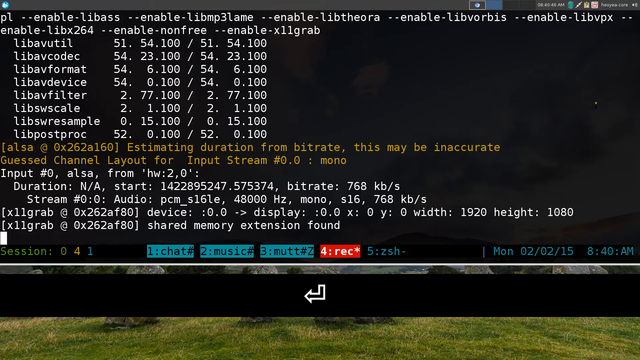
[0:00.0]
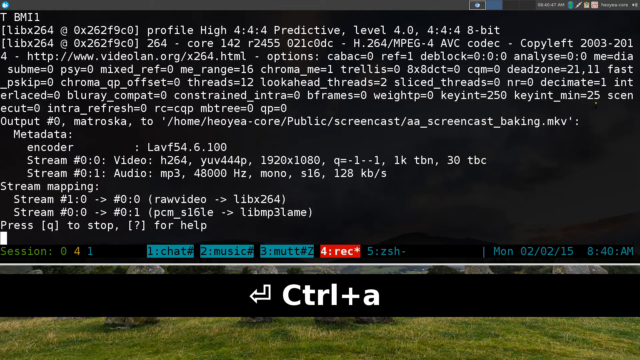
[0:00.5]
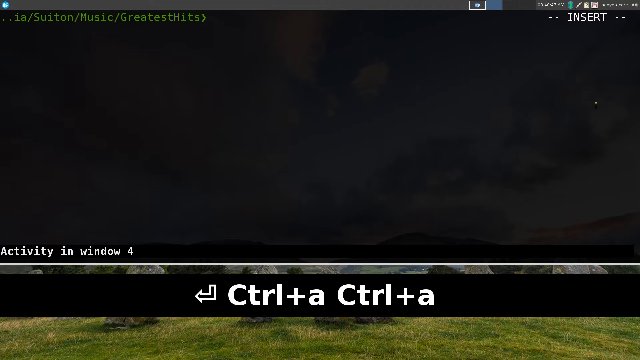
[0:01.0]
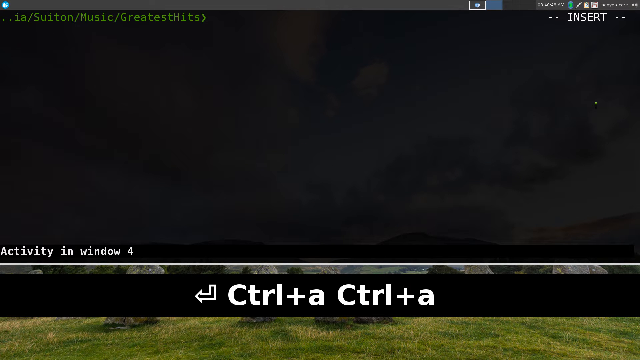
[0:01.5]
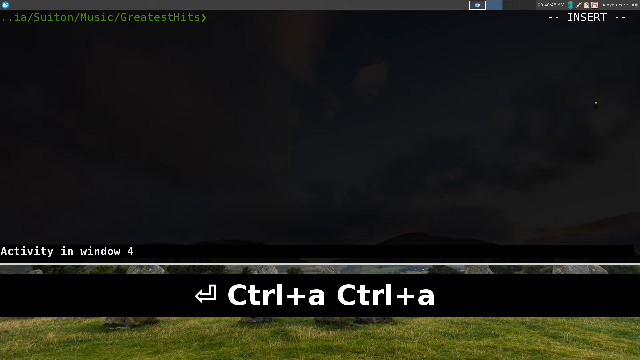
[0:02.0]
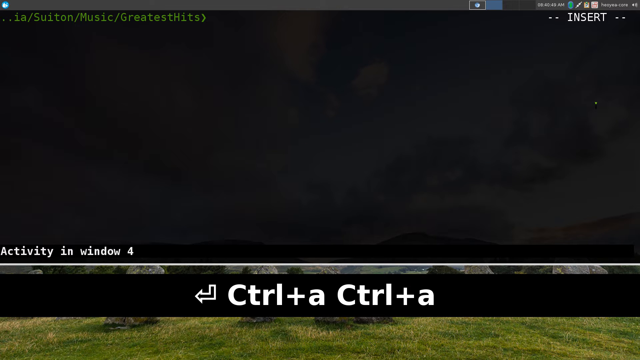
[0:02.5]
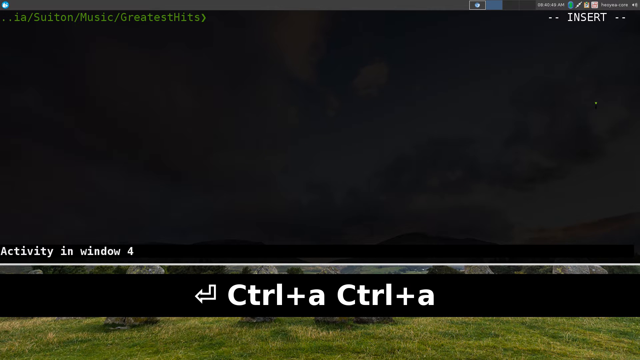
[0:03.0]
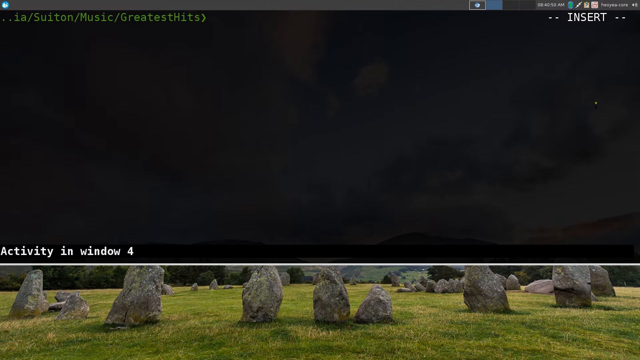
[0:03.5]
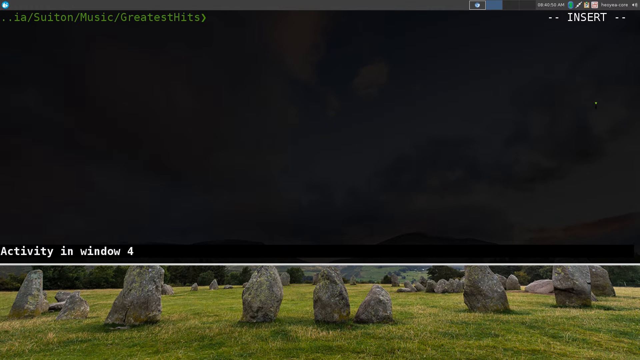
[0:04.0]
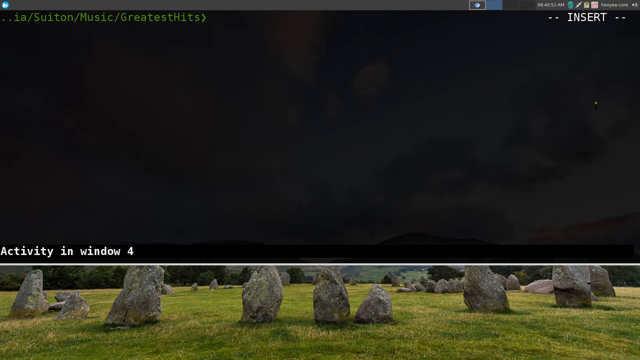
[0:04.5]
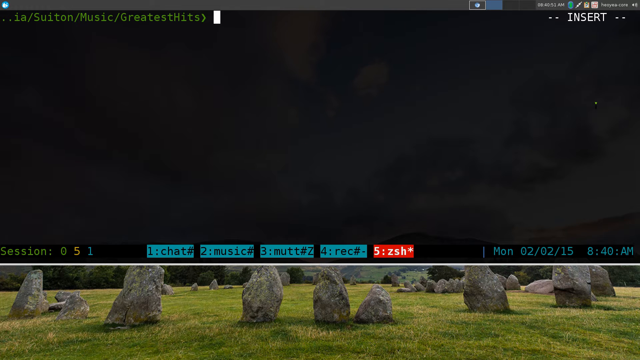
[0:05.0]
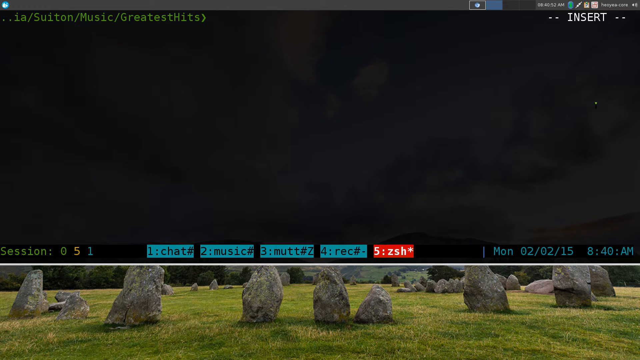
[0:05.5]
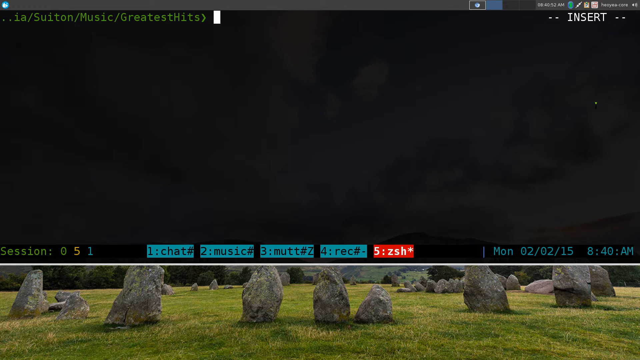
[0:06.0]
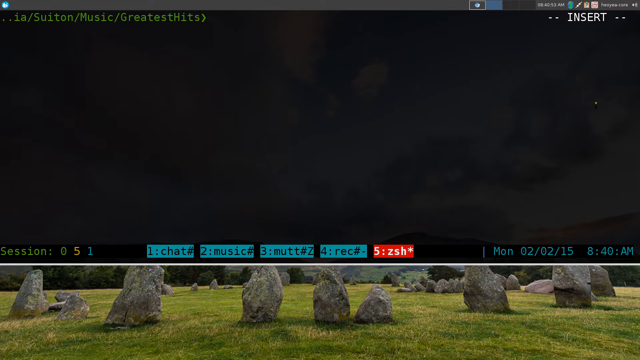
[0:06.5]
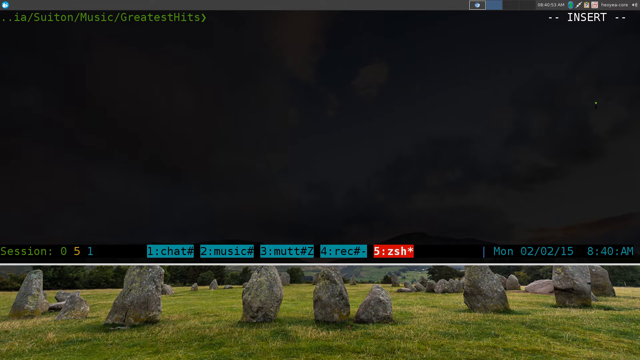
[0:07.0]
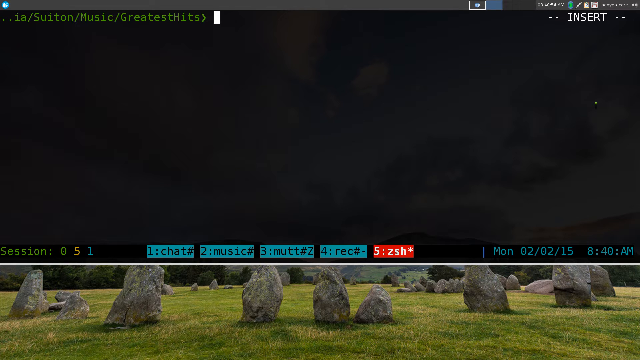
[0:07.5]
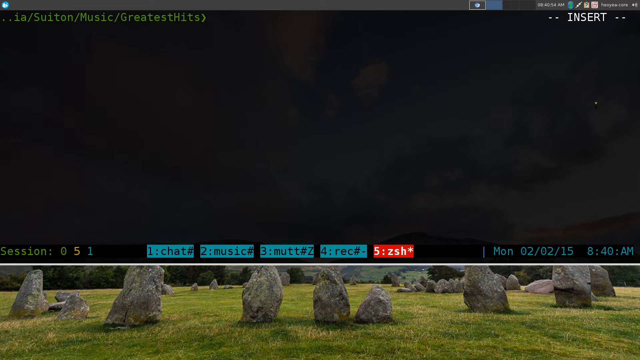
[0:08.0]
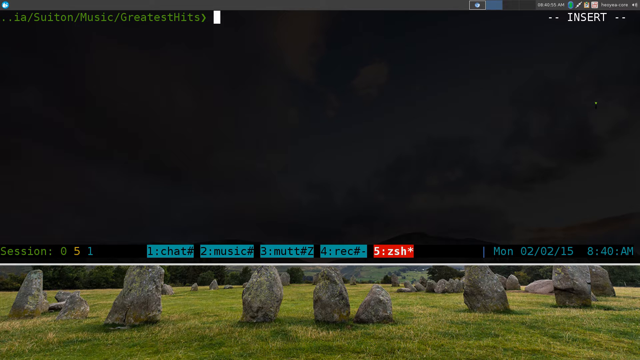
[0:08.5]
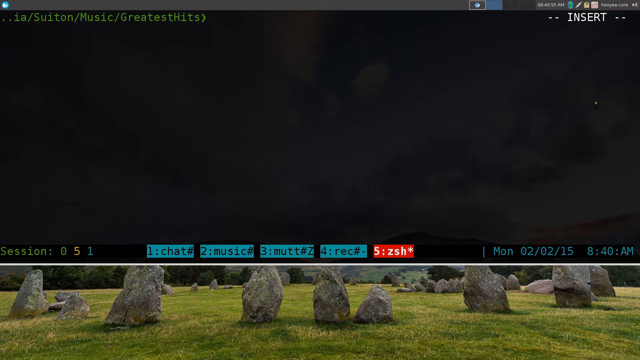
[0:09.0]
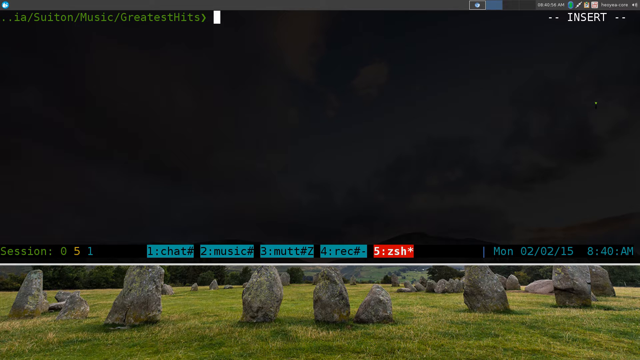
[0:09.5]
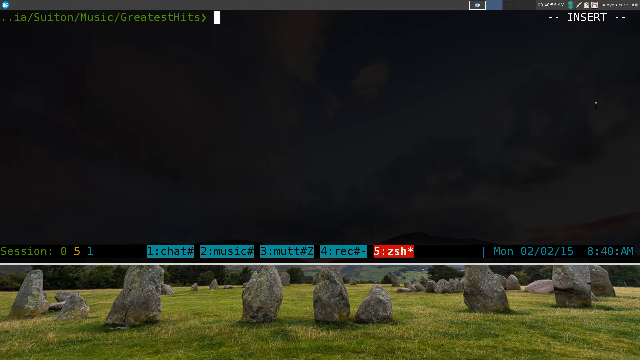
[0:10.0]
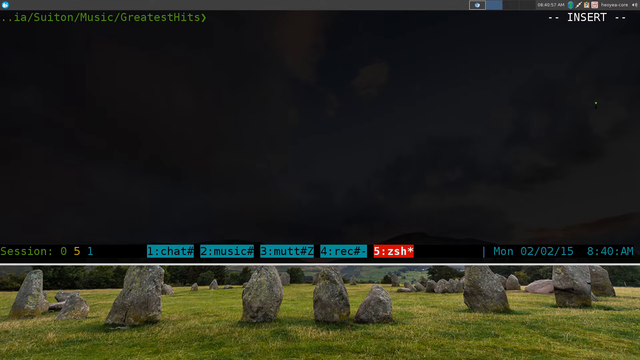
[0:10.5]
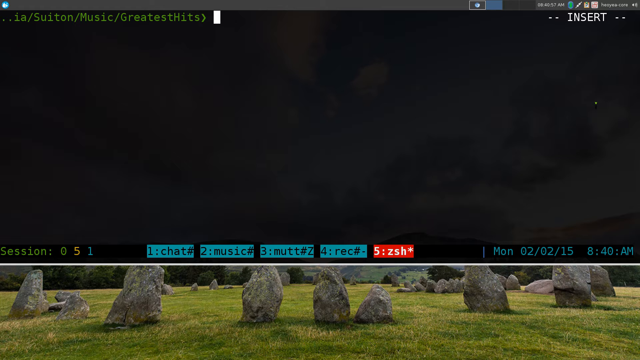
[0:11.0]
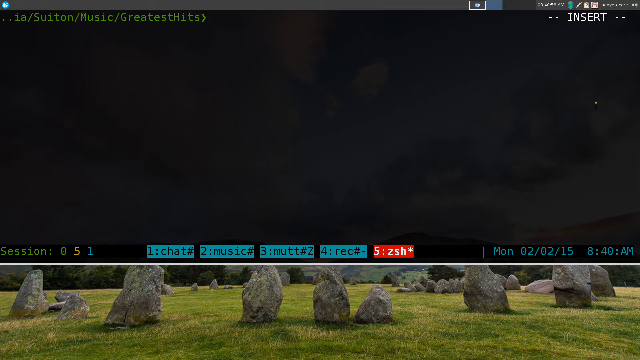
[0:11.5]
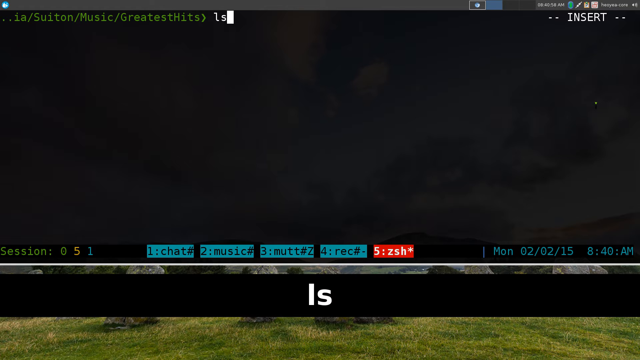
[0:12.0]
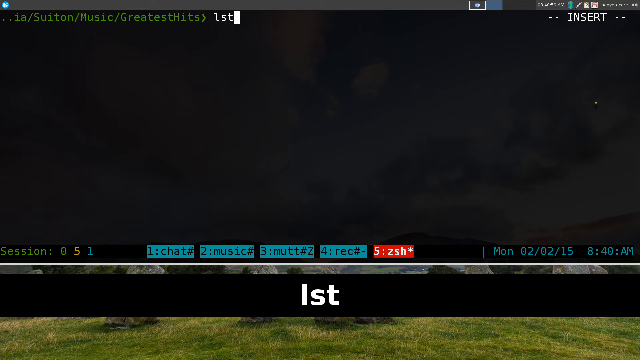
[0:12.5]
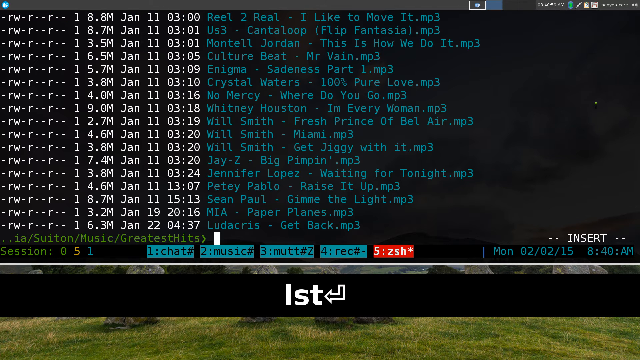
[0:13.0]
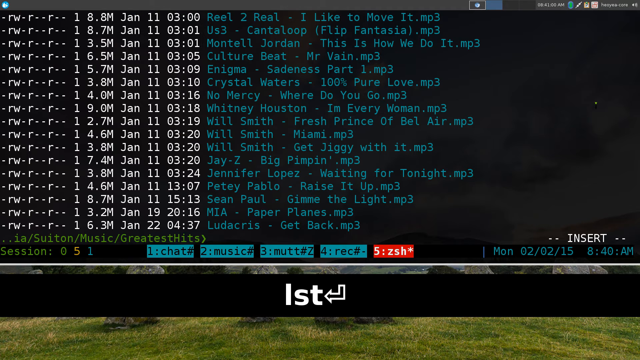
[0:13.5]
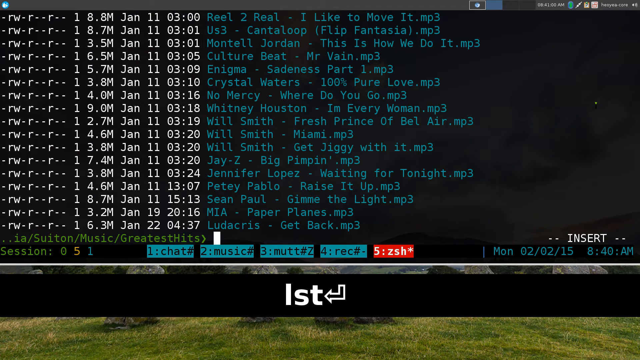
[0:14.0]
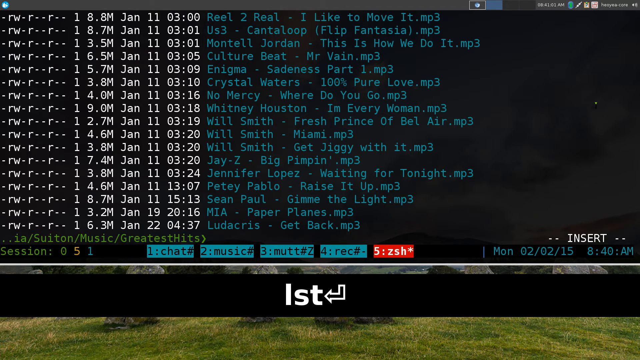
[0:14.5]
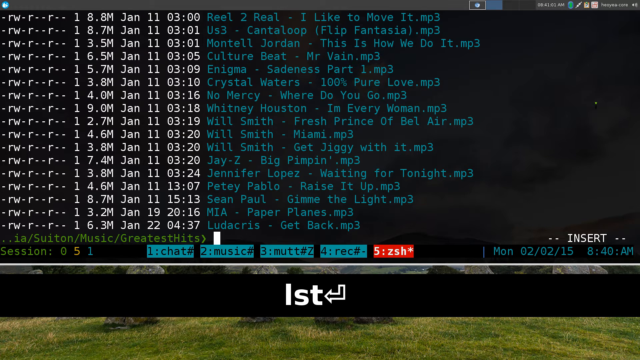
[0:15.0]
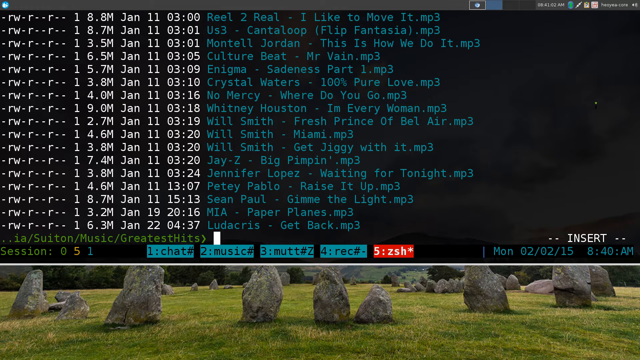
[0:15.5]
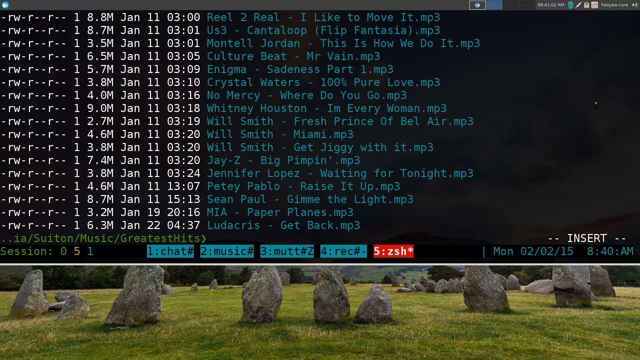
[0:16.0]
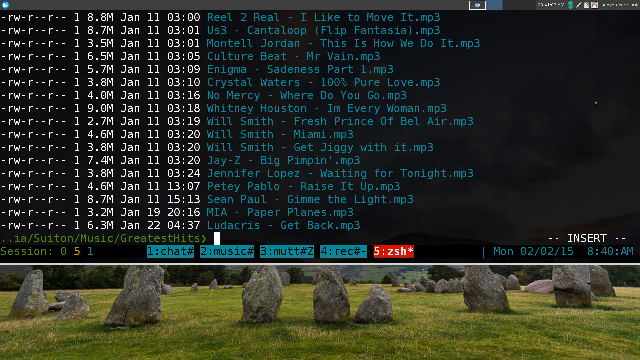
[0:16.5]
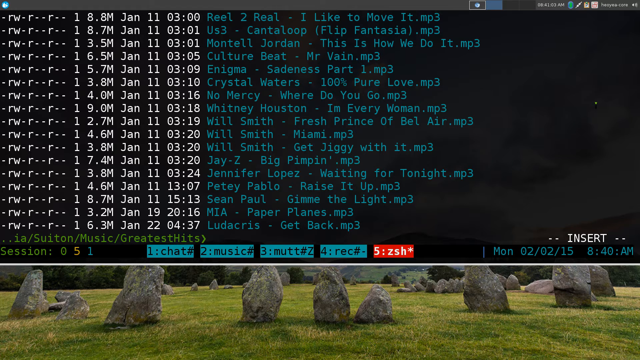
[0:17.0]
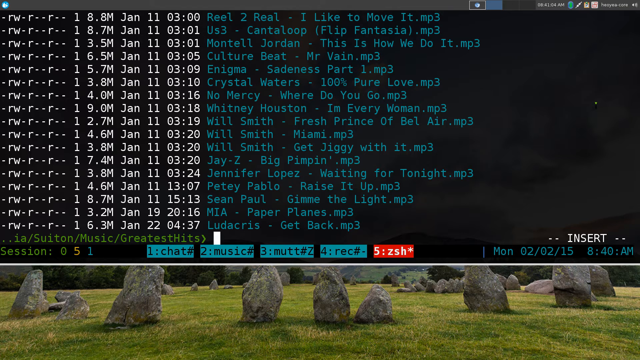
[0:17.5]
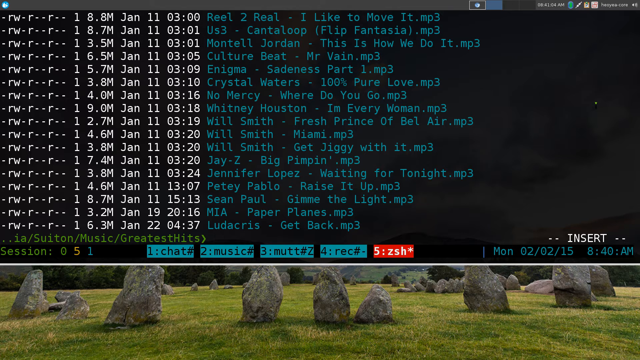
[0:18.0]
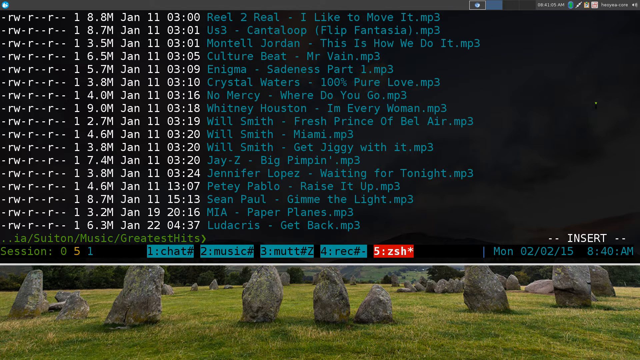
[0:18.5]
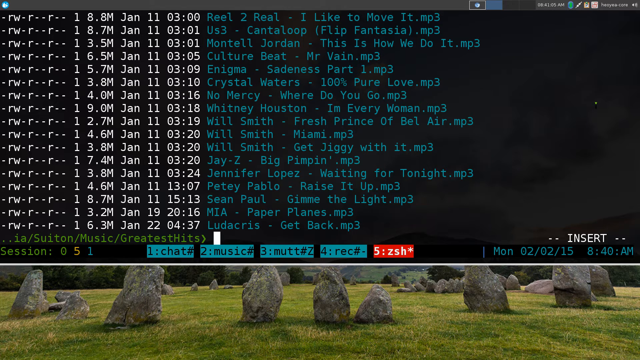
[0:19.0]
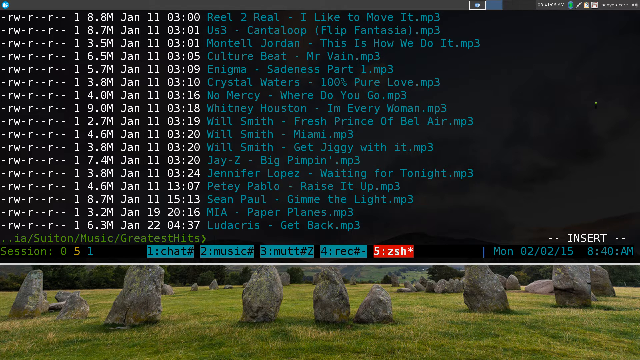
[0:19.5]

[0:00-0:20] A command screen window is open, initially showing the user enabling multiple music-related libraries. The user presses CTRL+A twice to get into the greatest hits folder within the music folder on their computer, shown in green text. After waiting a few seconds, the user types LST, the list command, and presses enter. A list of various songs appears in blue, ranging from hip-hop to pop to rap and other types of music. At the bottom of the screen are numbered items: 1 for chat, 2 for music, 3 for mutt, and 4 for rec. A fifth button, ZSH, is highlighted in red, while the others are highlighted in blue. The user stays on the screen with the song titles, which also show a date and size for each song.